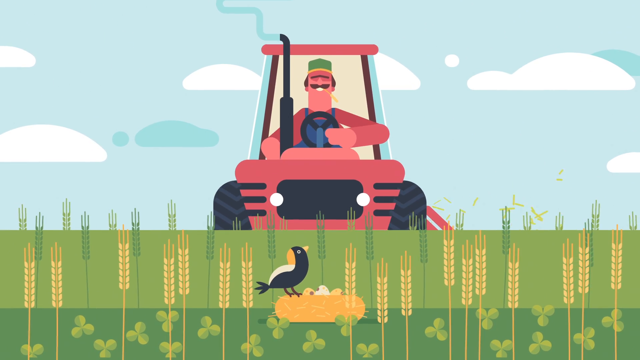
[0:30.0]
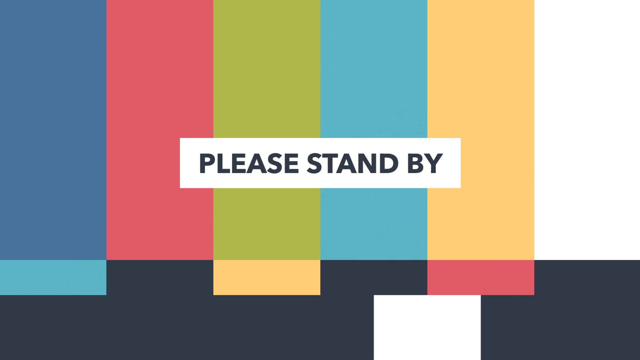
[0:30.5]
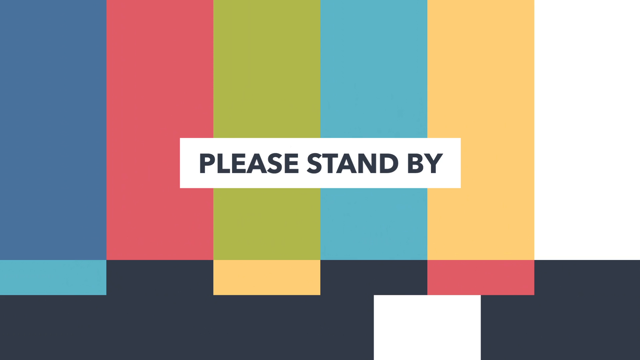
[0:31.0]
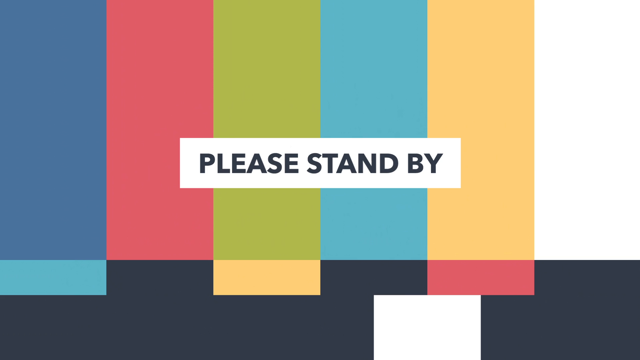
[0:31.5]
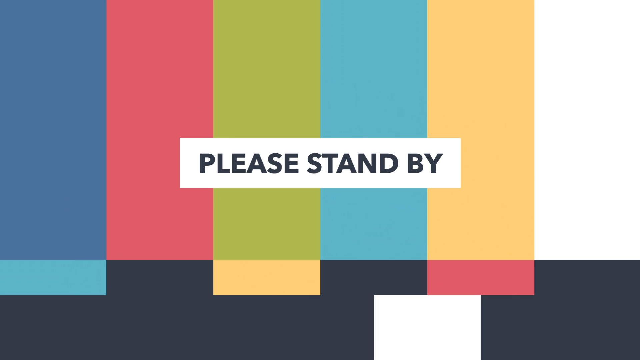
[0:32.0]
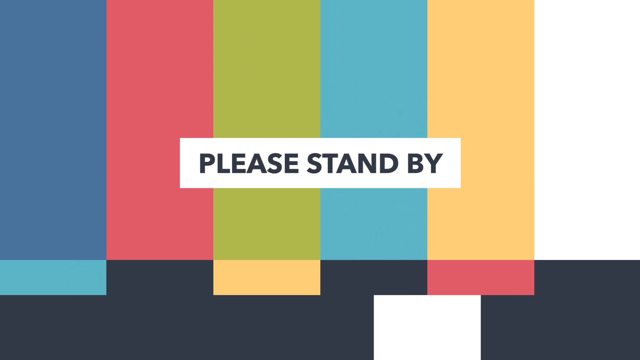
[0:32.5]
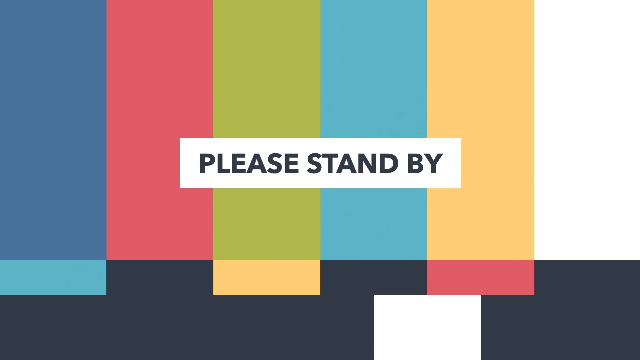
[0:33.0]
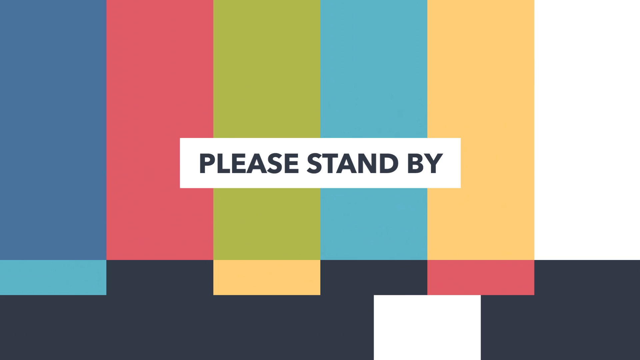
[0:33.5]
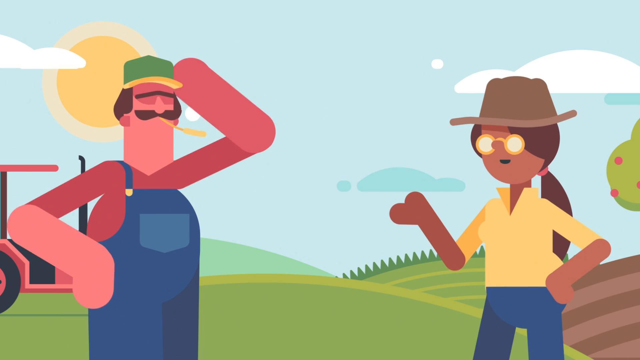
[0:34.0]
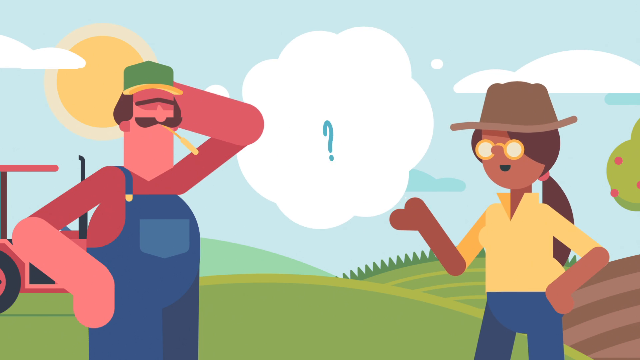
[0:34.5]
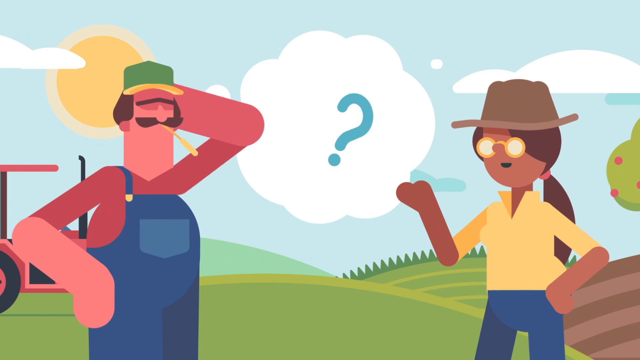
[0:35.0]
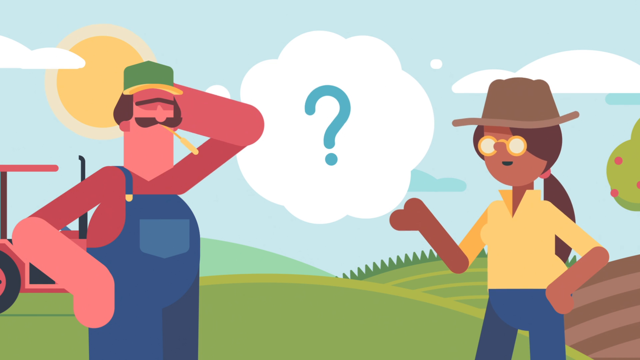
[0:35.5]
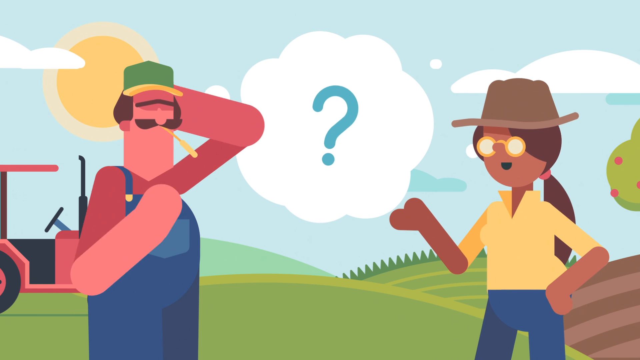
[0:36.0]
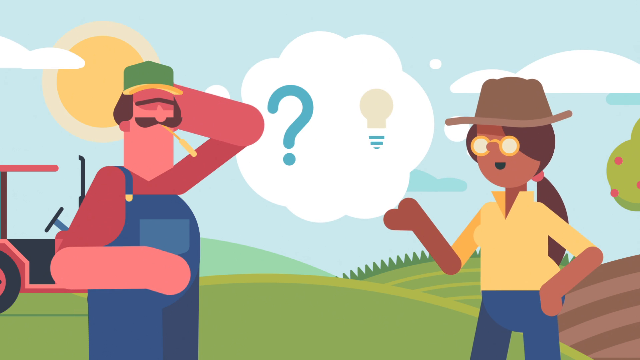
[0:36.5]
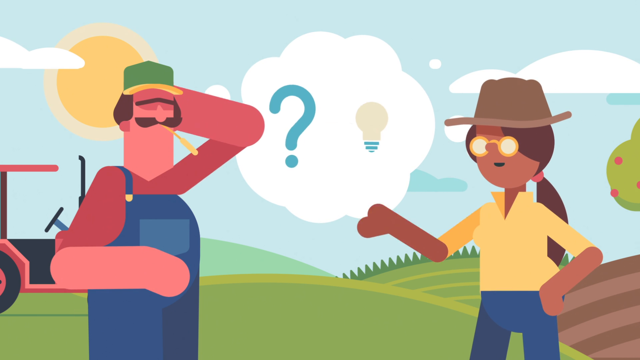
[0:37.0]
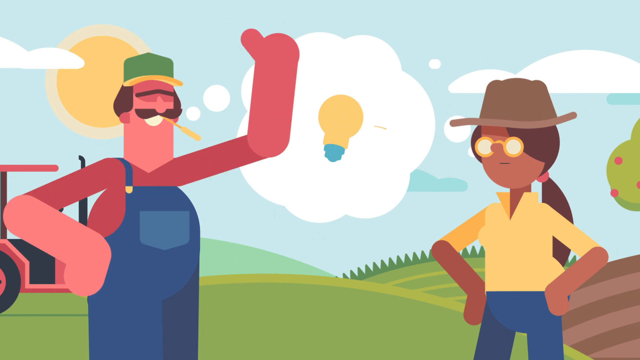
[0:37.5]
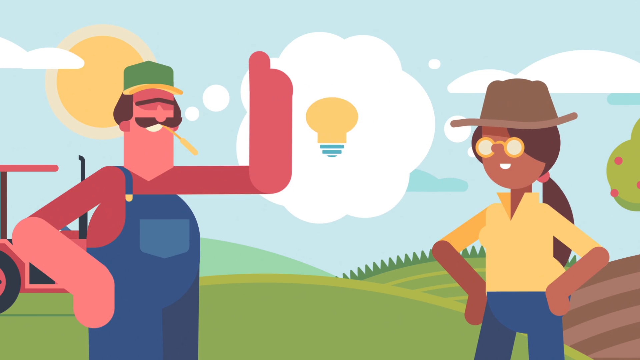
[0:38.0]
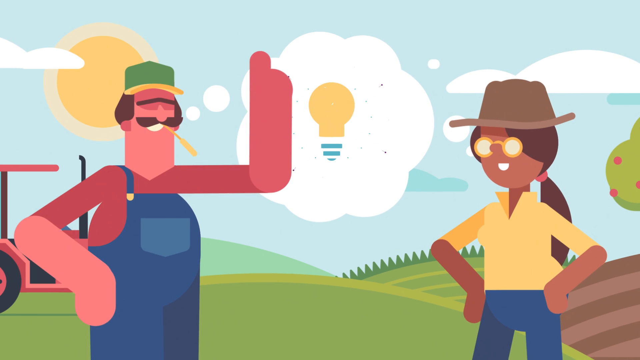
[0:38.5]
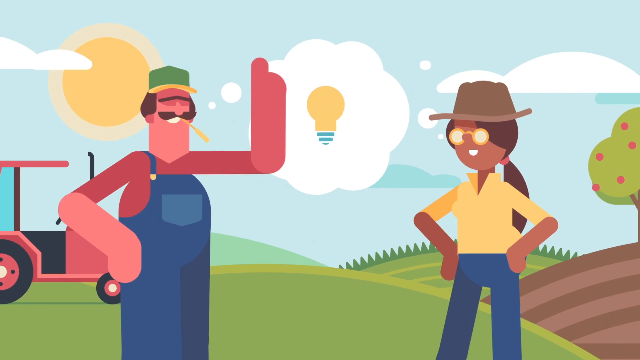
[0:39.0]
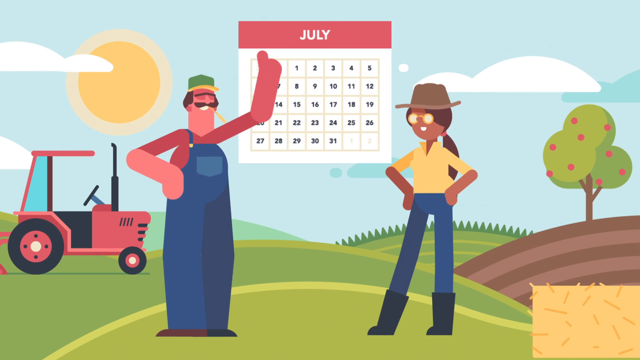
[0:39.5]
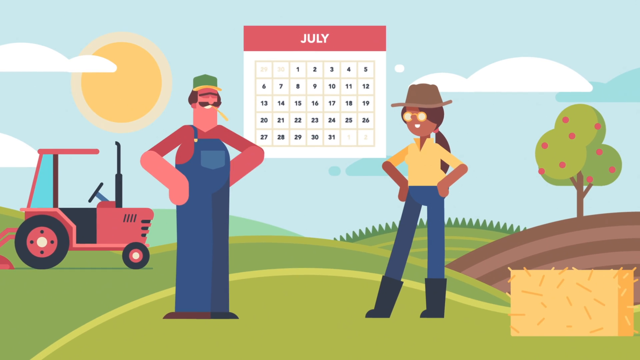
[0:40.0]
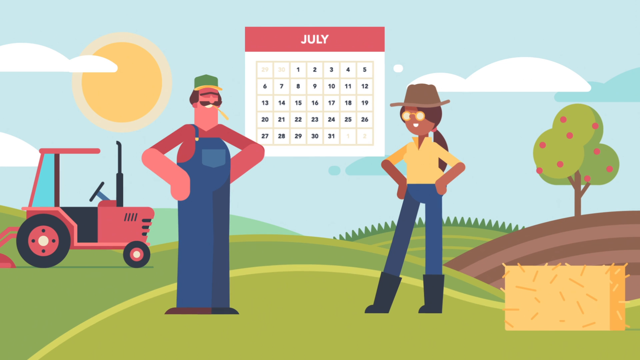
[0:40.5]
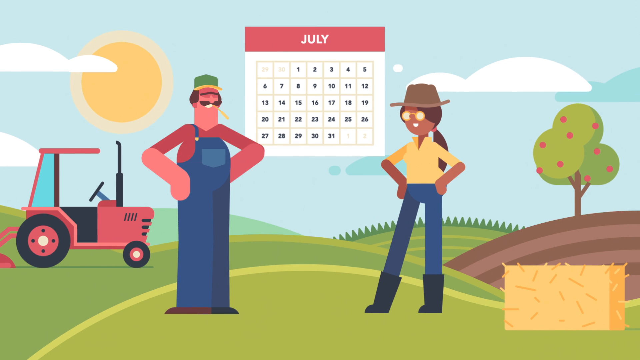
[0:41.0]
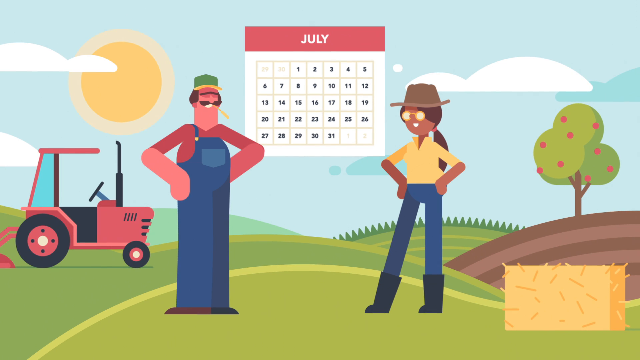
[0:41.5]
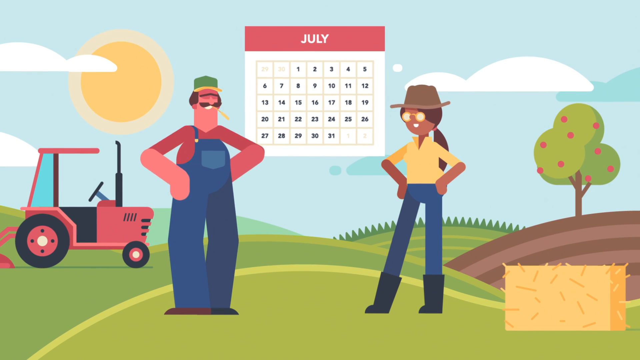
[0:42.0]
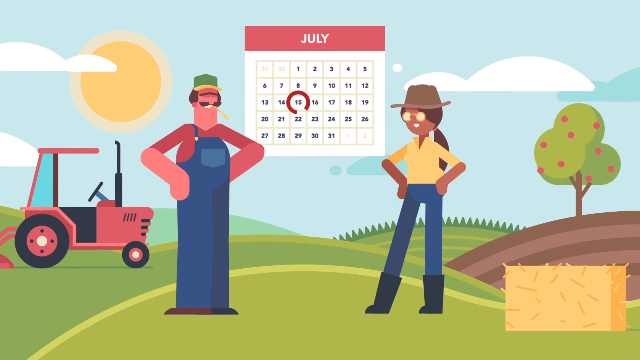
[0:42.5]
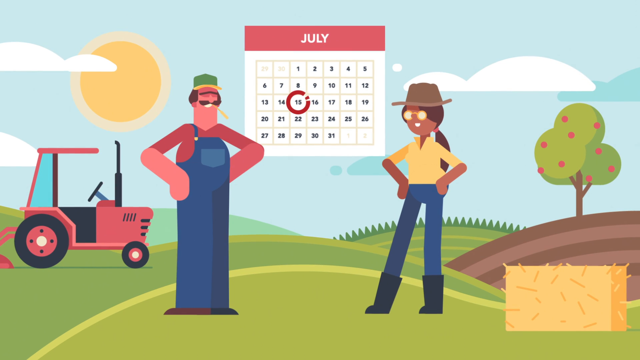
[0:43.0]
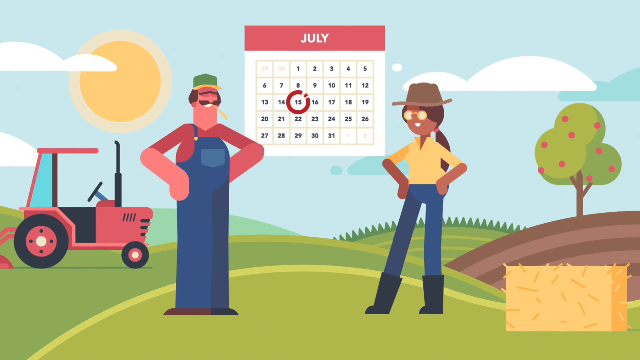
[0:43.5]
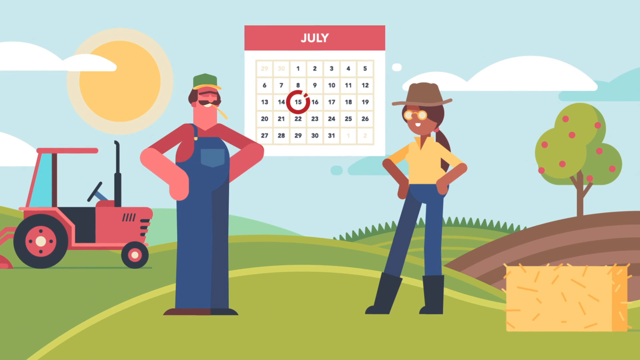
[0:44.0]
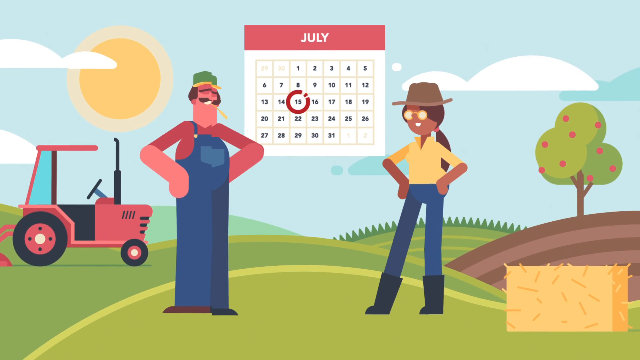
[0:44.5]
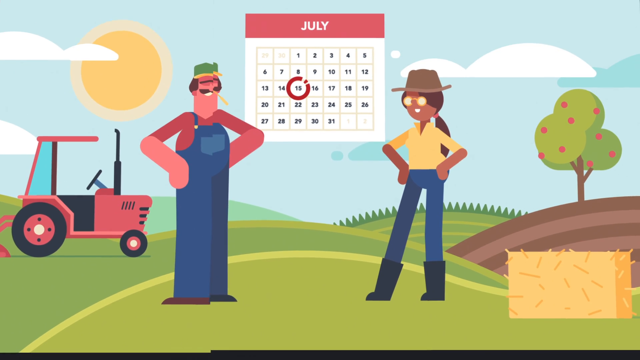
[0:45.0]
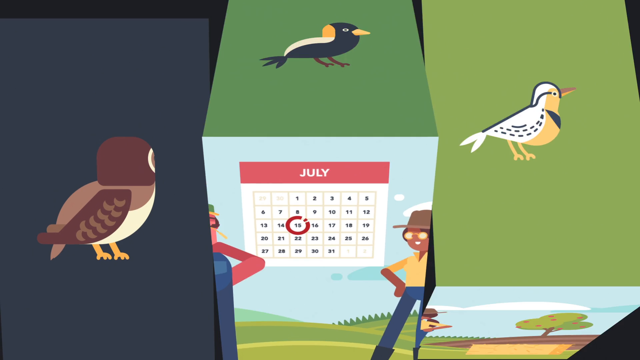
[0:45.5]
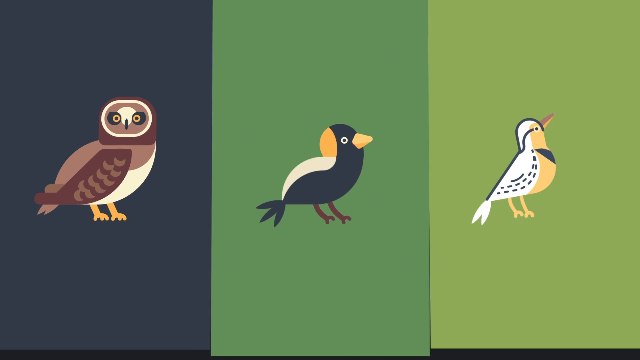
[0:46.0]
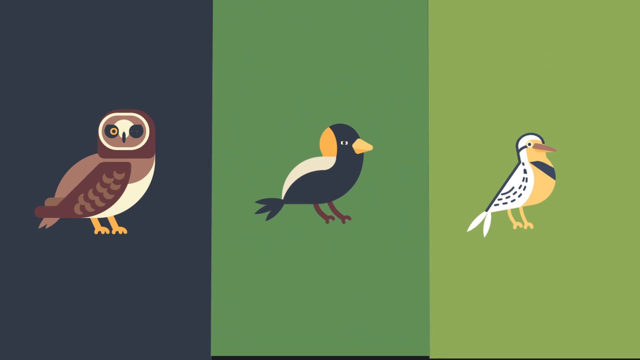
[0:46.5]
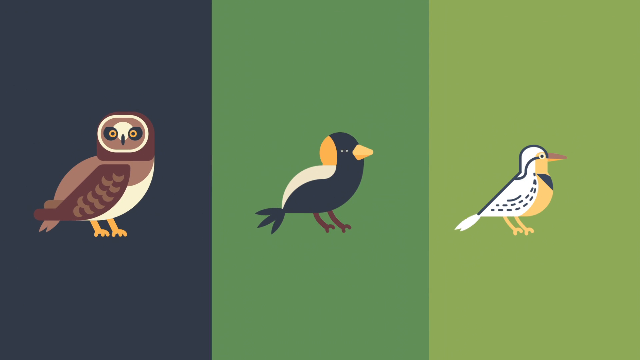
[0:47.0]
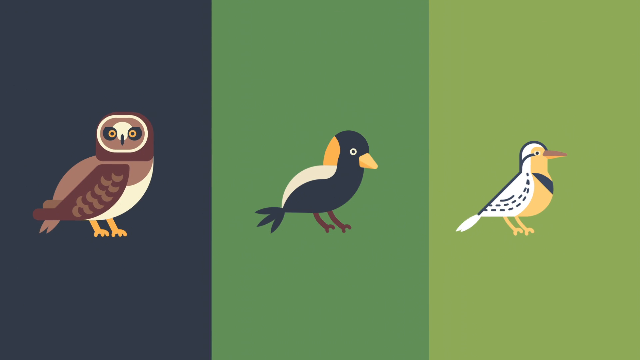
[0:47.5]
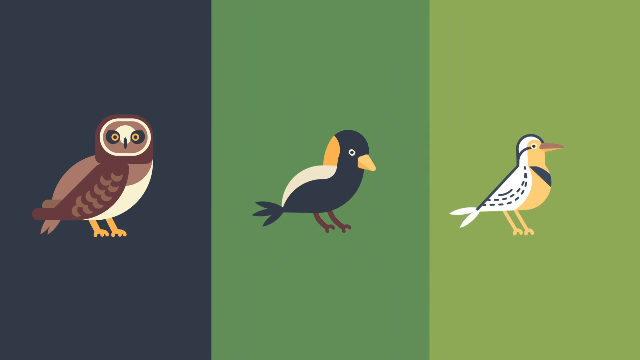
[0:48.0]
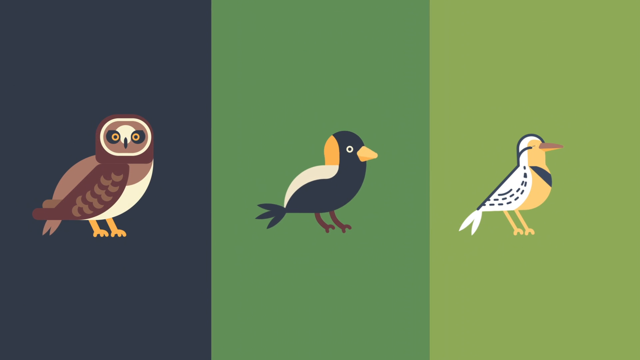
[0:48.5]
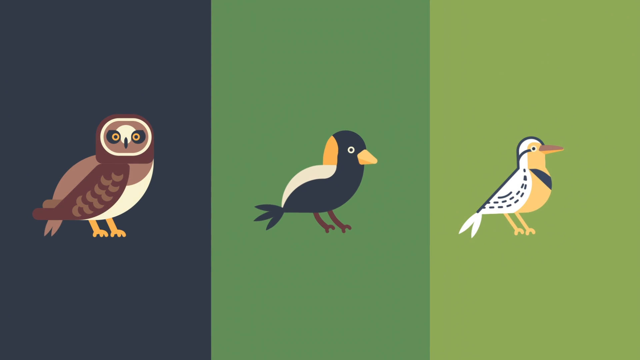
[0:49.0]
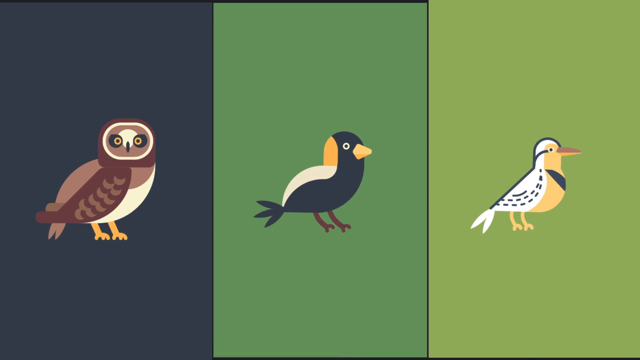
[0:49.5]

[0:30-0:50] A farmer gets ready to mow down some tall grass, but in his path is a nest with three eggs in it and a bird on top protecting the eggs from being mowed down. The screen then goes to a "please stand by" screen with multiple colors and a black border. In the next scene the farmer talks to a woman, and they both seem to be coming up with ideas on how to cut the grass at a later date. A thought bubble pops up with light bulbs that go from off to on. A calendar appears with the date July 15th circled. The screen then splits into three and shows three birds: an owl, the bird that was on top of the nest, and another bird that is yellow, black and white. Then the screen splits into multiple squares with a different animal in each square.